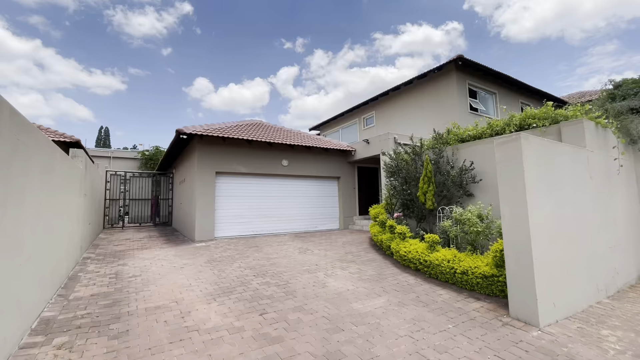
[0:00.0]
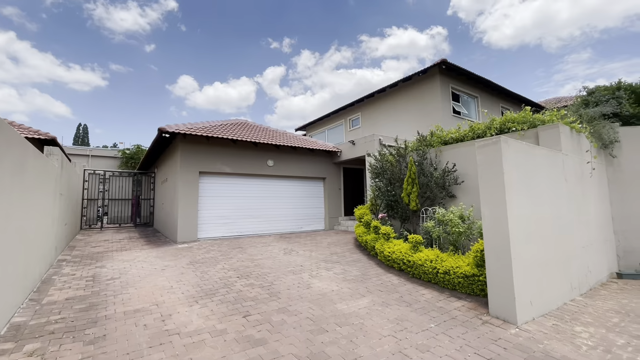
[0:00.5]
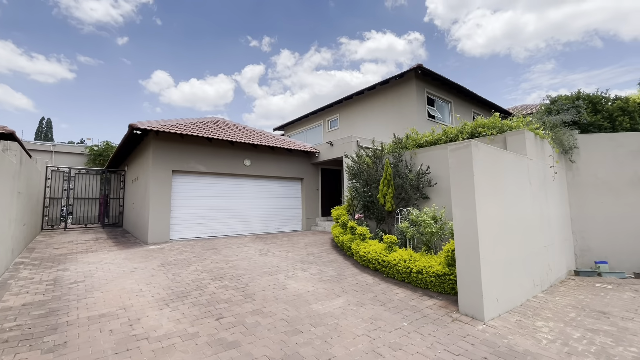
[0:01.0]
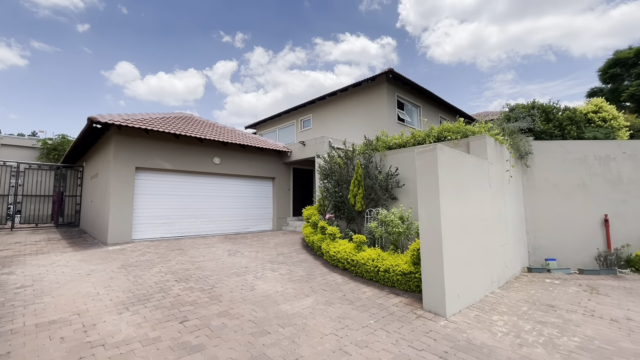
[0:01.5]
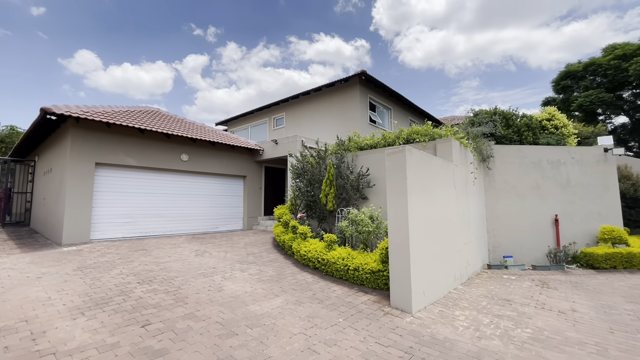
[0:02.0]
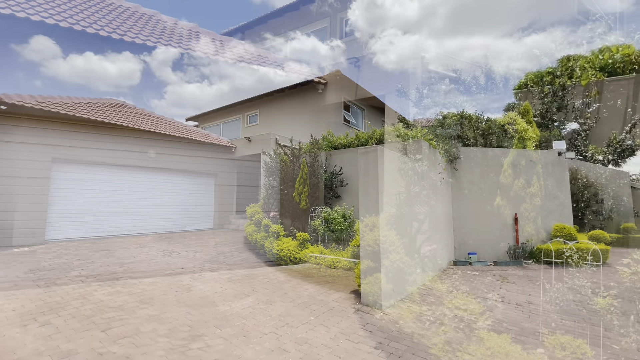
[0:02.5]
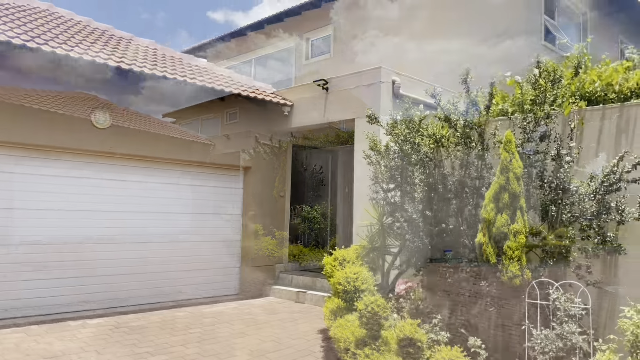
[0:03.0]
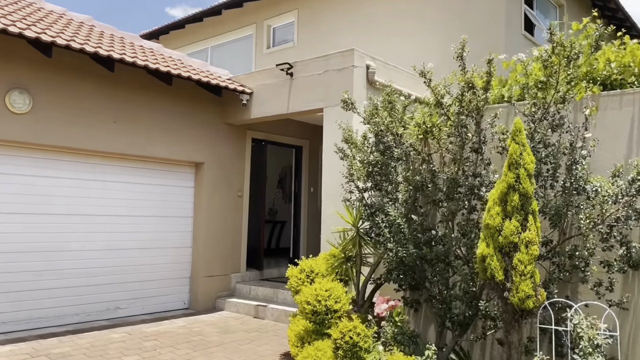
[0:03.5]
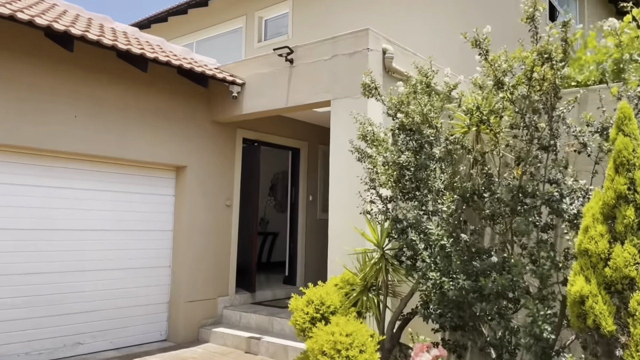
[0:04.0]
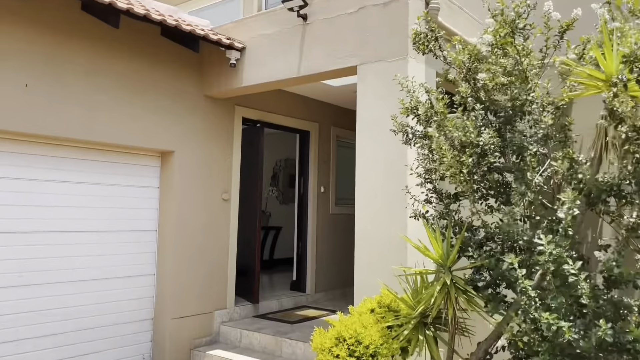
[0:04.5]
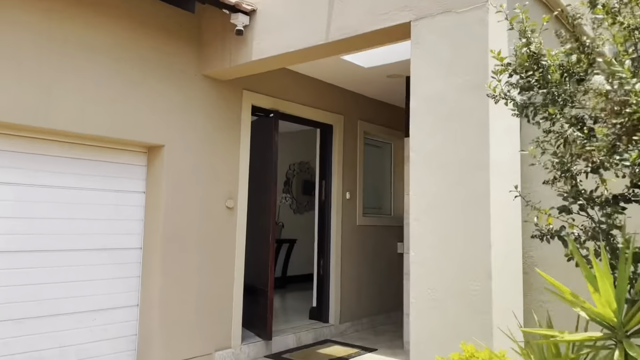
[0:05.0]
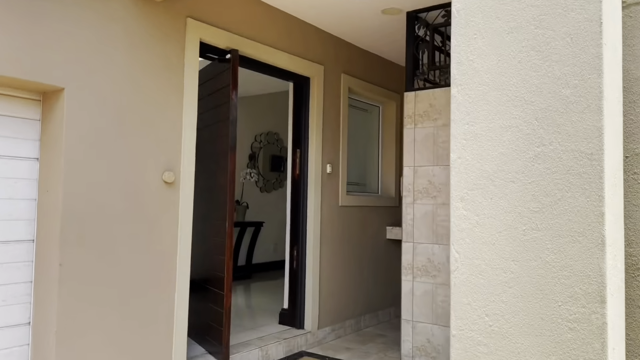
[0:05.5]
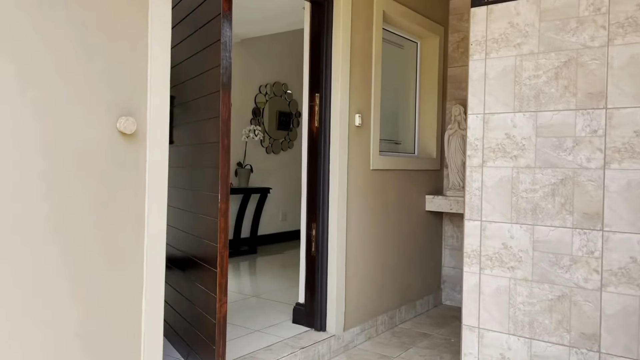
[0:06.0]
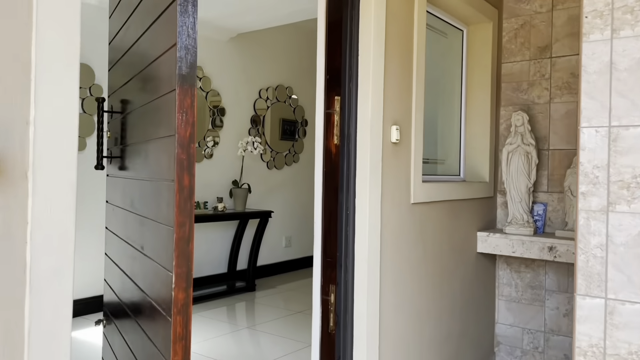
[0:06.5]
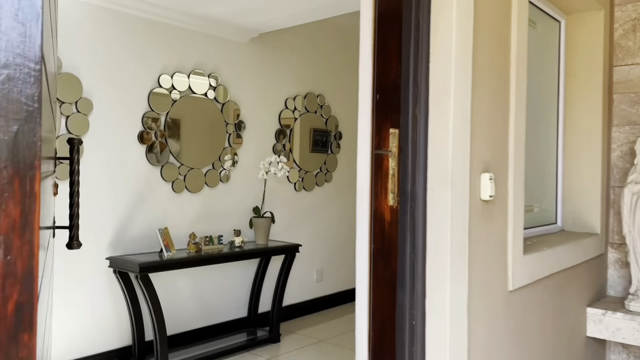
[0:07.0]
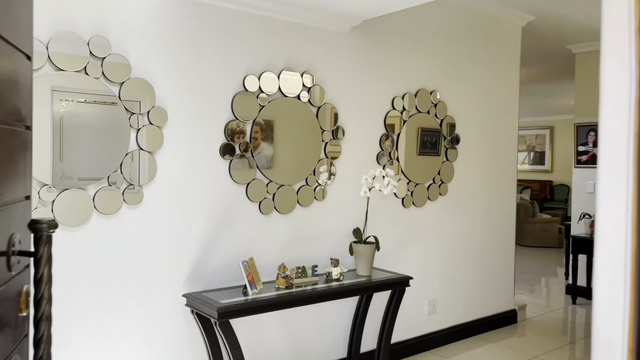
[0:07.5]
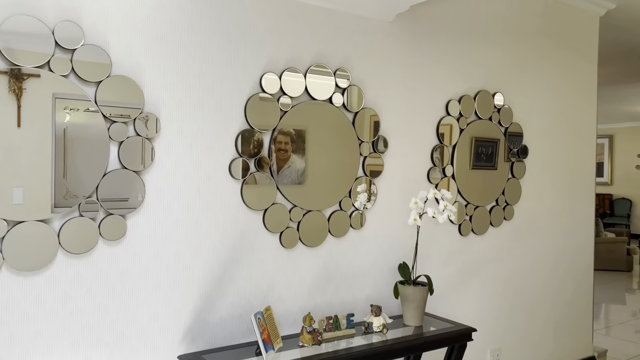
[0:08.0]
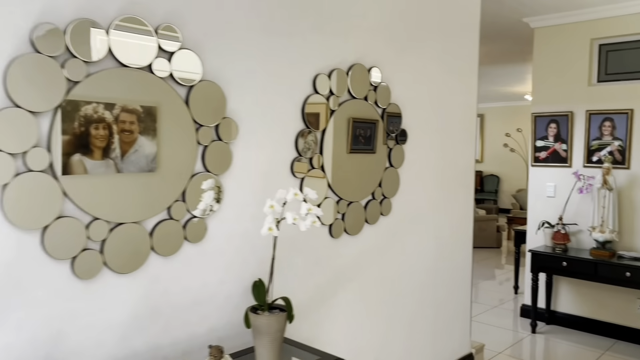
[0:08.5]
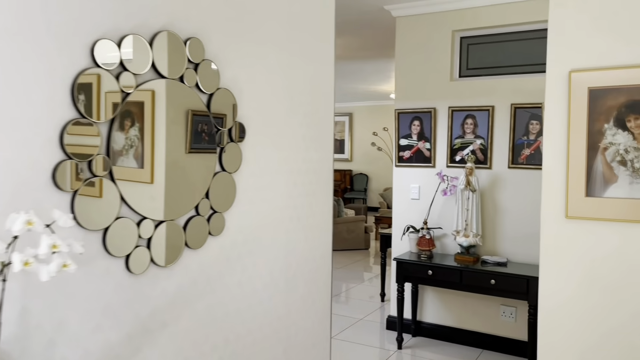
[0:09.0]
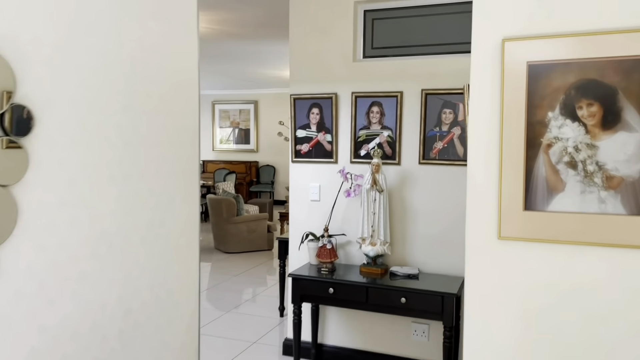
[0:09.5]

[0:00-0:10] The video apparently shows a beige, light brown house with a brick-coloured triangular roof. Walls in the same colour surround it, with yellow and green vegetation around it. There seems to be a garage to the left of the house in the same style, with a white gate that rolls down and up. The camera moves towards the door, which is a red wooden colour, and some Christian statues are visible to the right on top of a little white shelf that looks like it is made of marble. Inside the house, the entrance has three circular mirrors.